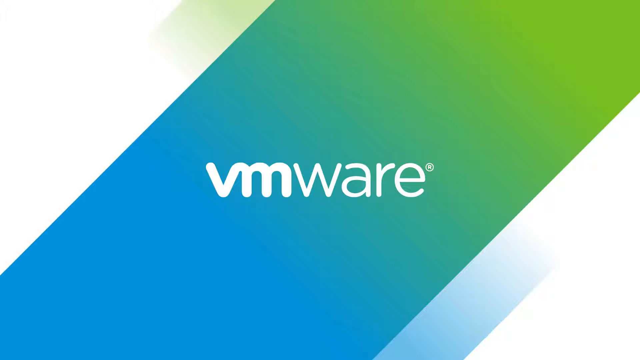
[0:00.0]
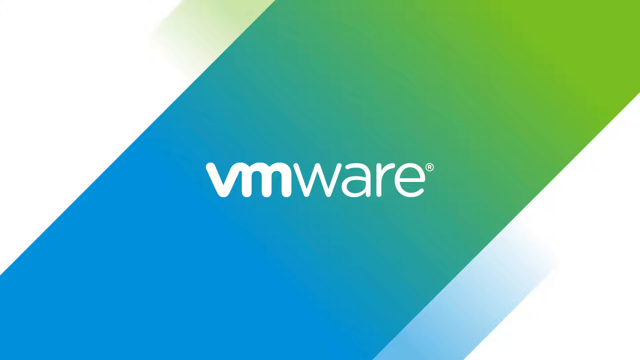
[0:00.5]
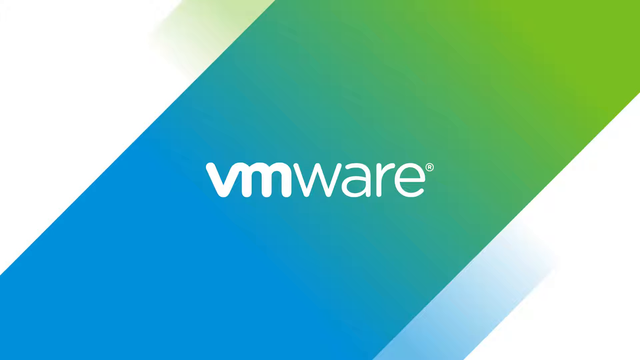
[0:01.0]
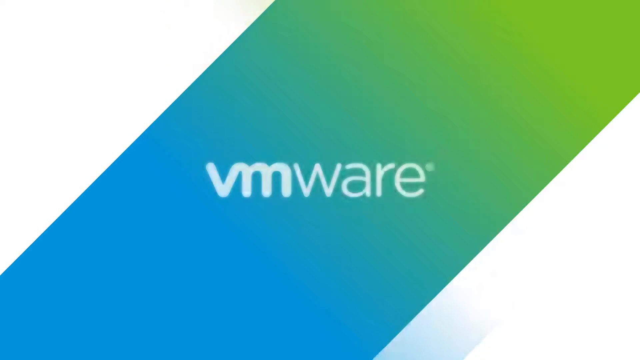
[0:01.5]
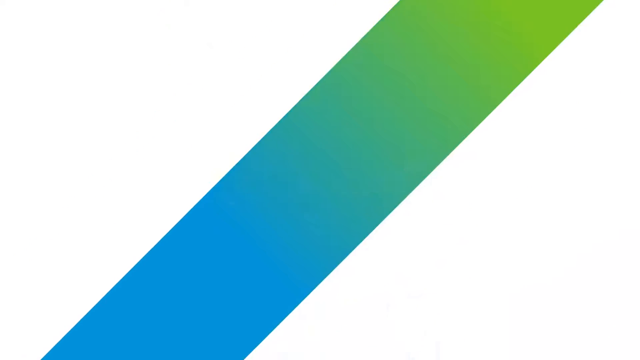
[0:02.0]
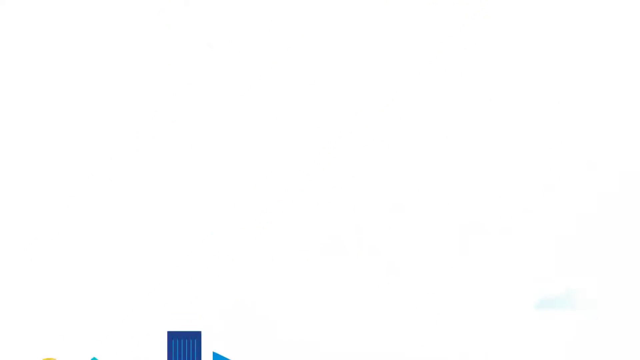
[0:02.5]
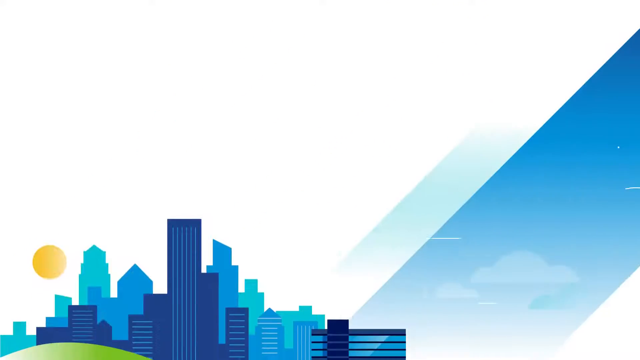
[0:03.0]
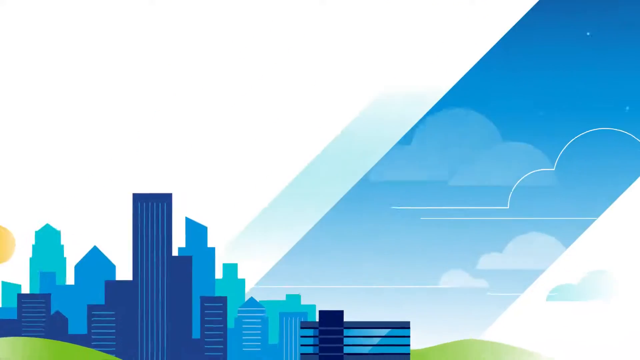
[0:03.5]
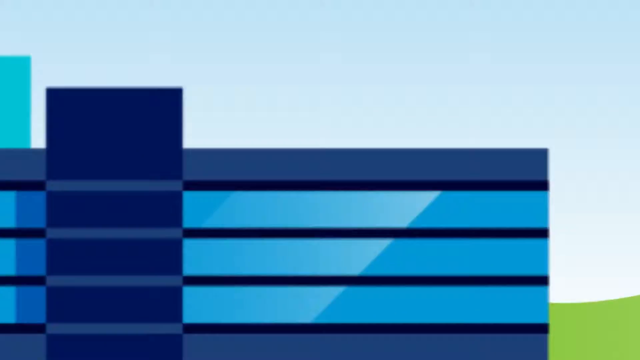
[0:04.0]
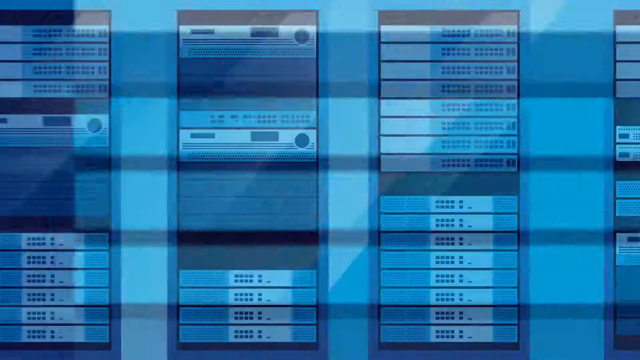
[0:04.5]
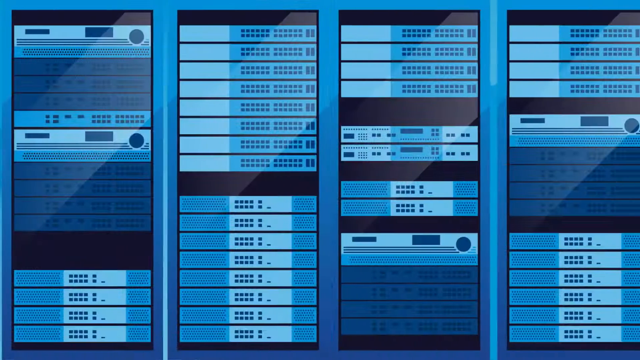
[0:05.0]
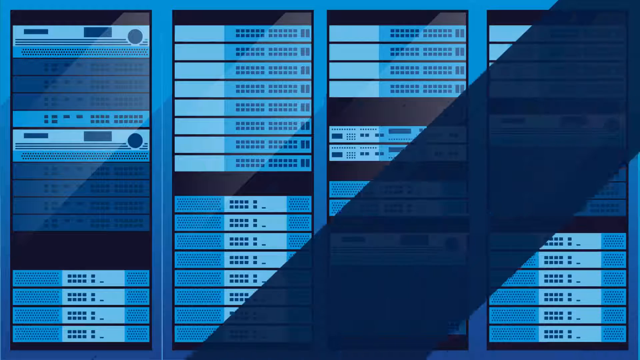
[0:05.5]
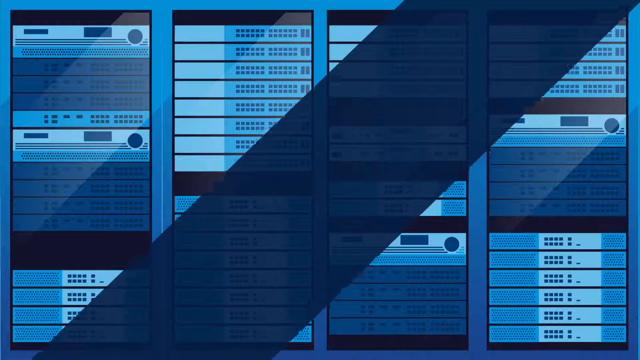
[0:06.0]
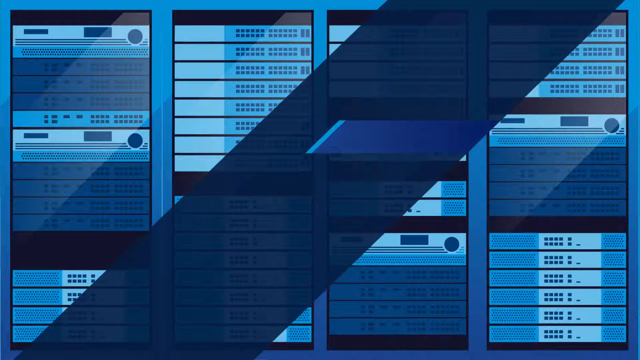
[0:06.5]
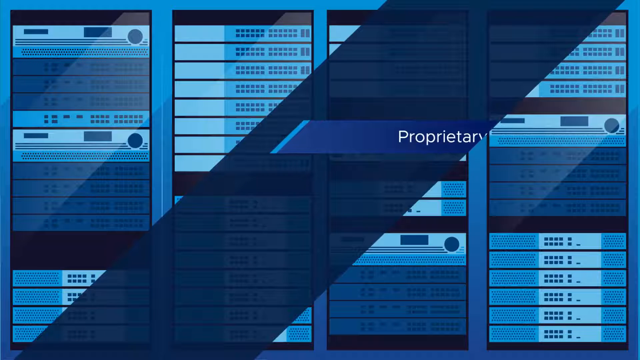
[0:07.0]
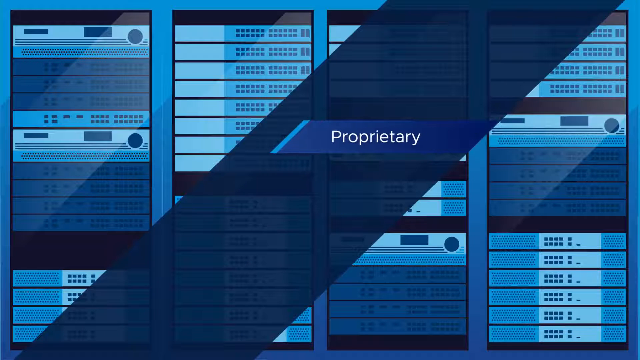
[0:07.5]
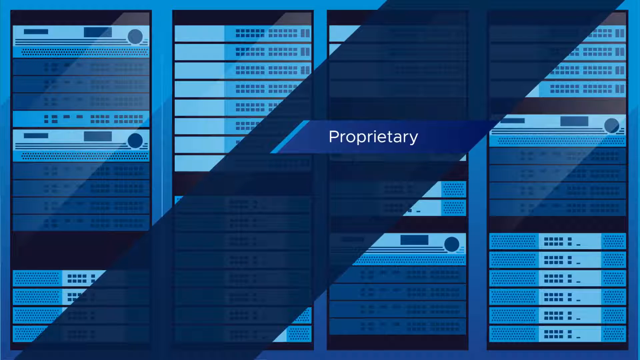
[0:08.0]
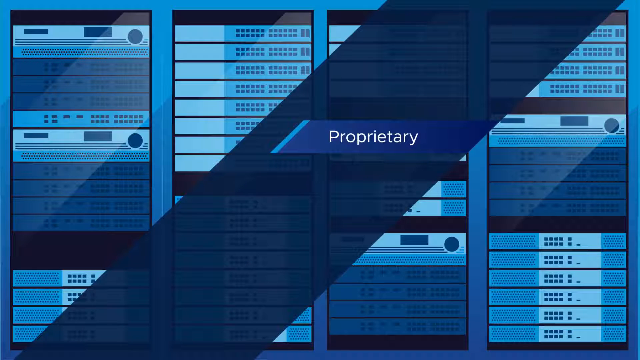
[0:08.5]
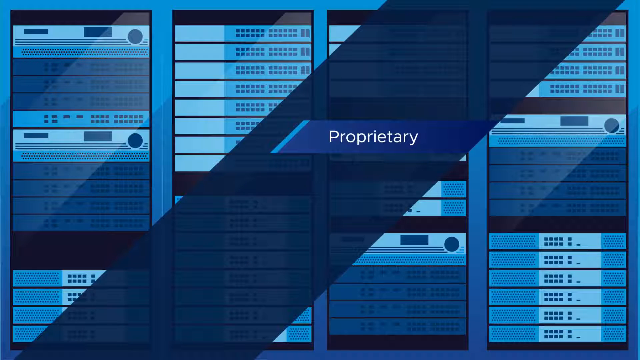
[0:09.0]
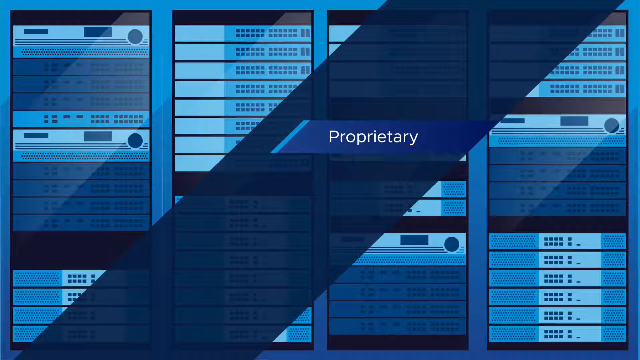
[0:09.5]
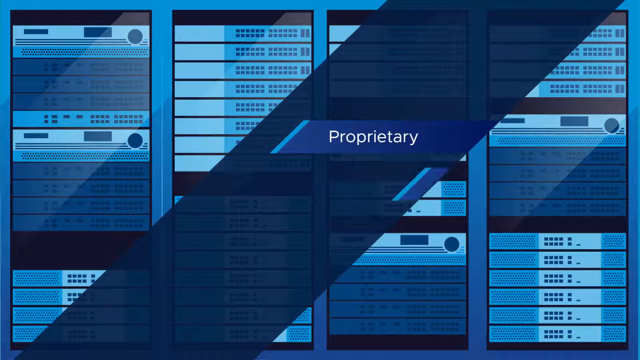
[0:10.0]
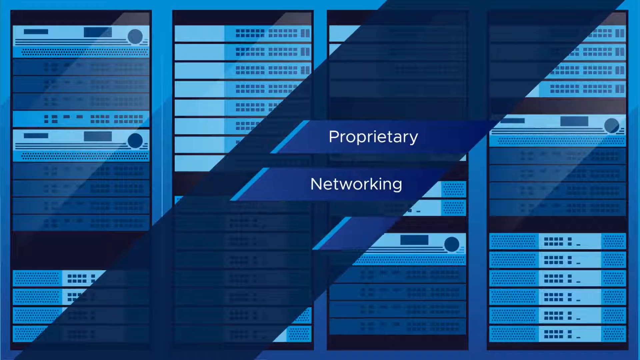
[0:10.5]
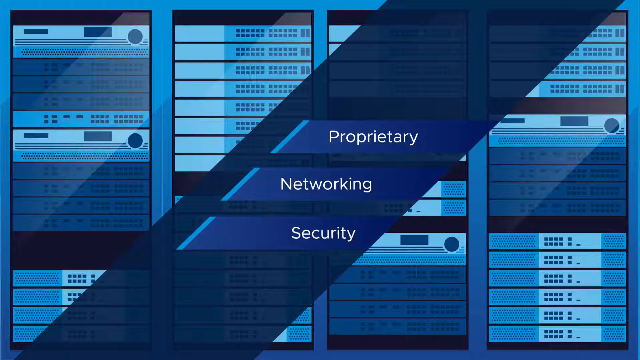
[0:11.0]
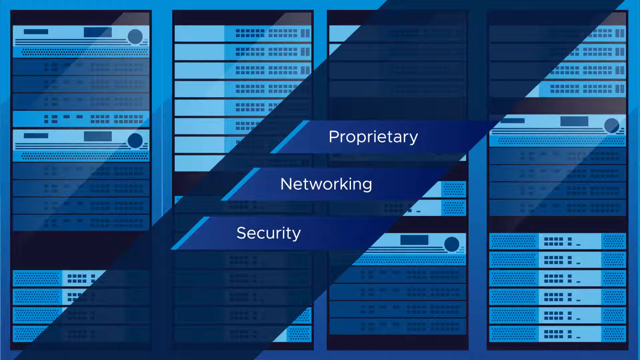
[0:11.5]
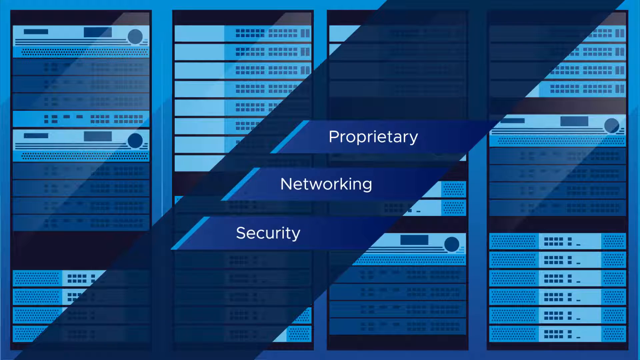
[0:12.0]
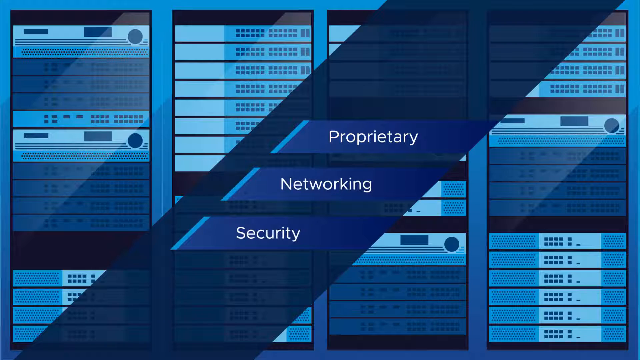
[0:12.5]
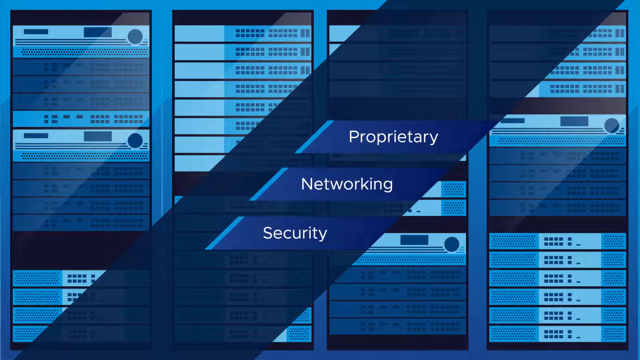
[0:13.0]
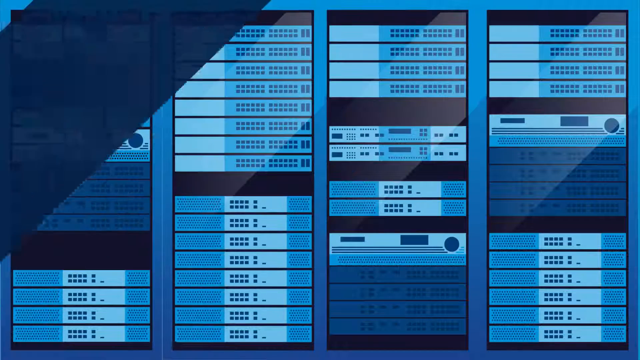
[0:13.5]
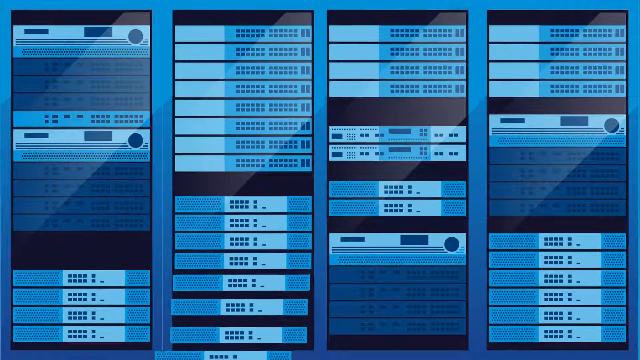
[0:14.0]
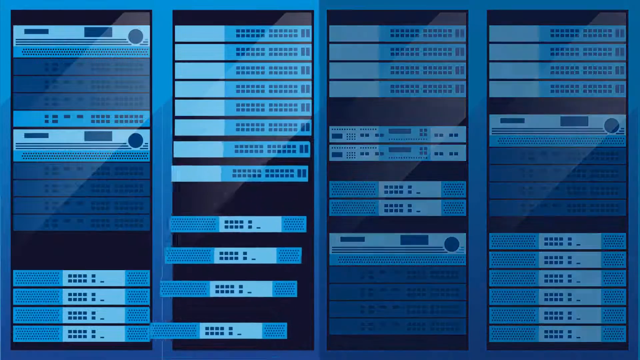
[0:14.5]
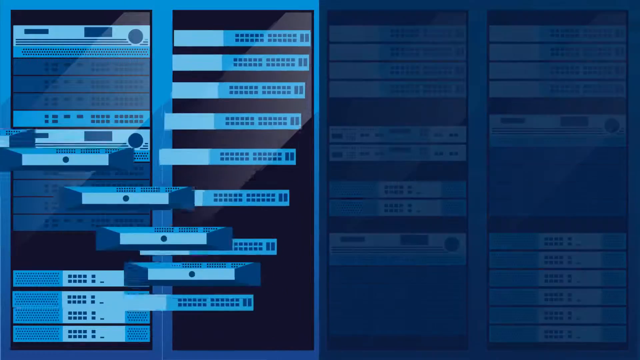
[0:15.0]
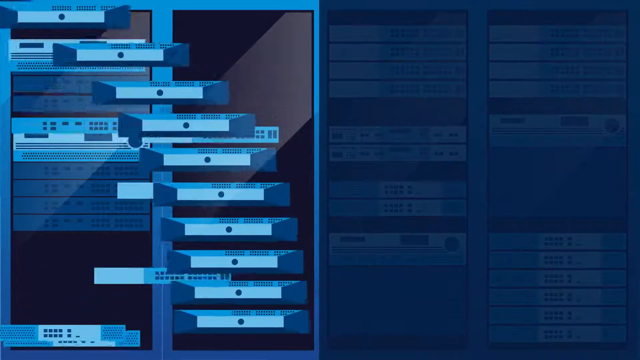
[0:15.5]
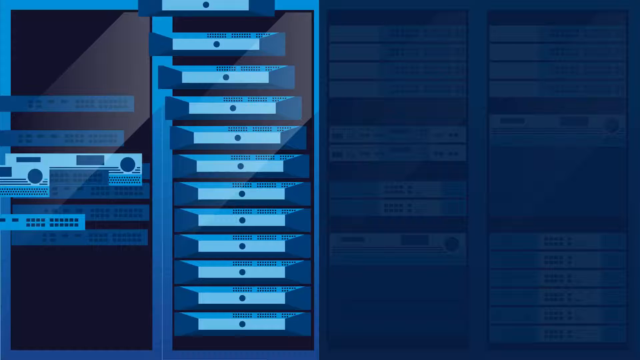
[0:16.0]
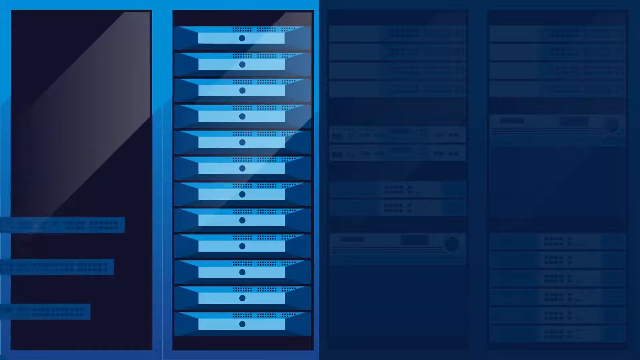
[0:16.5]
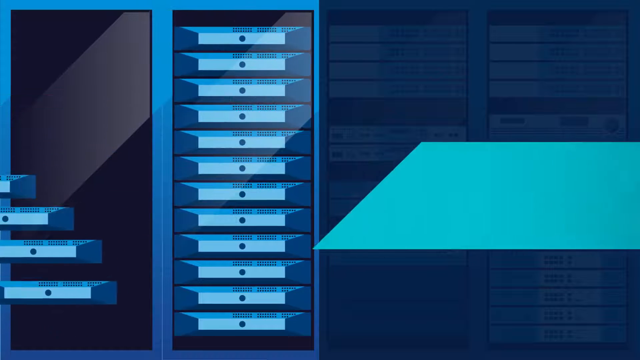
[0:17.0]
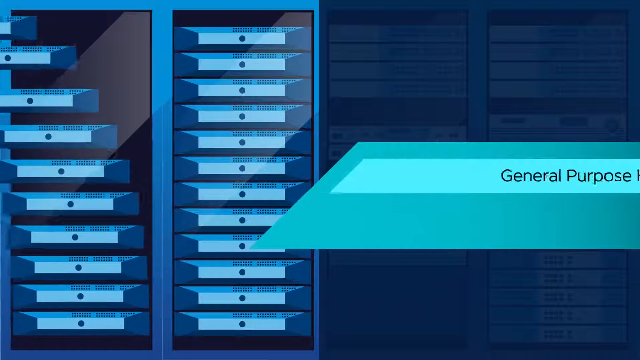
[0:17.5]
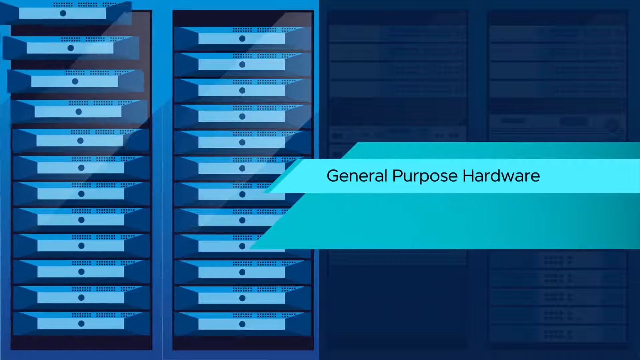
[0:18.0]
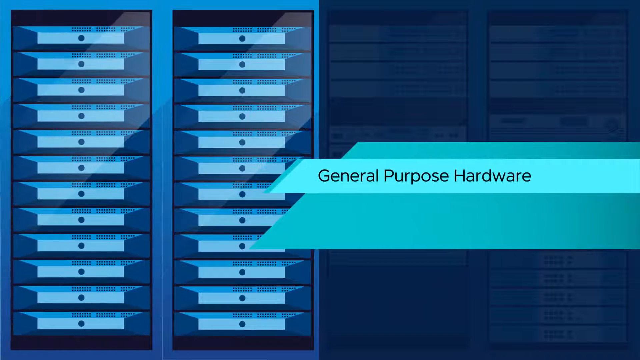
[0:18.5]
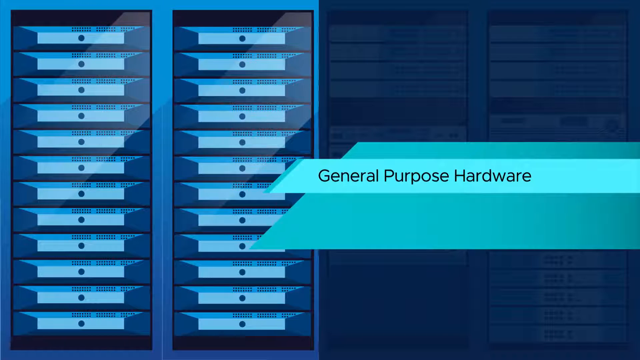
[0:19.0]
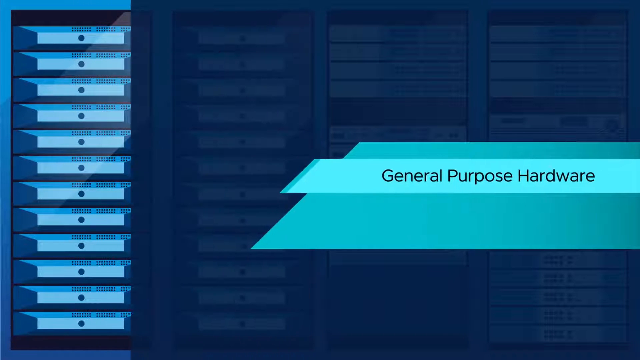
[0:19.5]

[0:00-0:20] The video looks like a PowerPoint presentation or something shown at a trade show. It opens with white in the upper left and bottom right, shifting to a tannish color, with bluish in the bottom left and green in the top right; white text in the center reads "VMWare". The logo folds in on itself, giving way to a cartoon drawing of a city landscape done entirely in blue. The view zooms in very quickly on an office building, and the scene becomes what looks like a server rack room, with computers and racks in different bluish hues. A bigger blue pop-up sweeps diagonally across the screen from the top right to the bottom left, and white text pops up reading "preparatory networking and security". Some of the racks disappear and newer racks come in, followed by a light green pop-up with black text reading "general purpose hardware".